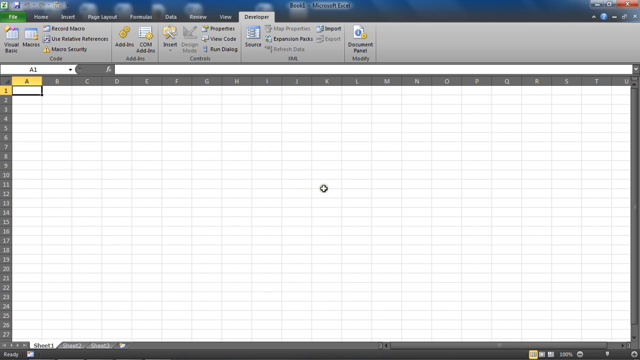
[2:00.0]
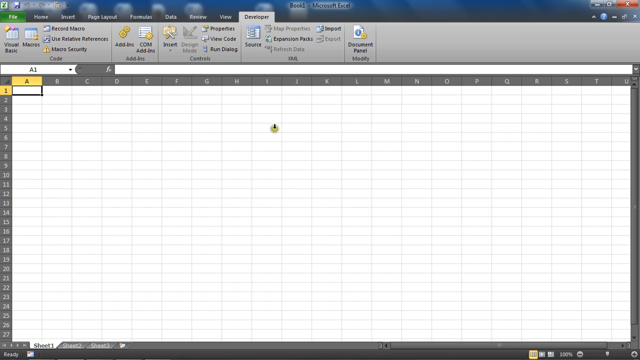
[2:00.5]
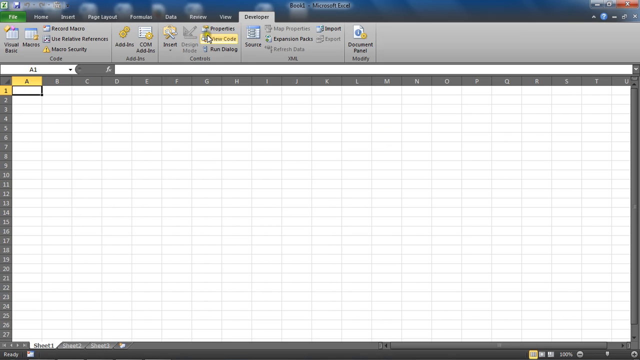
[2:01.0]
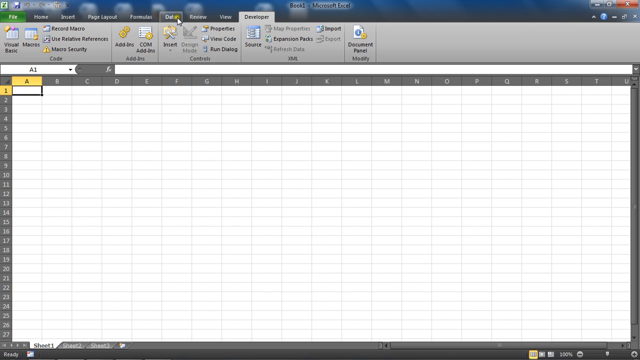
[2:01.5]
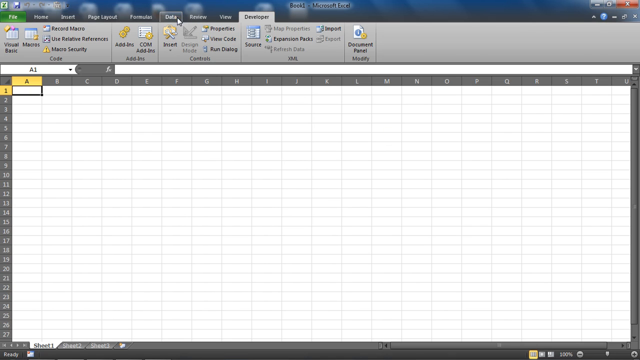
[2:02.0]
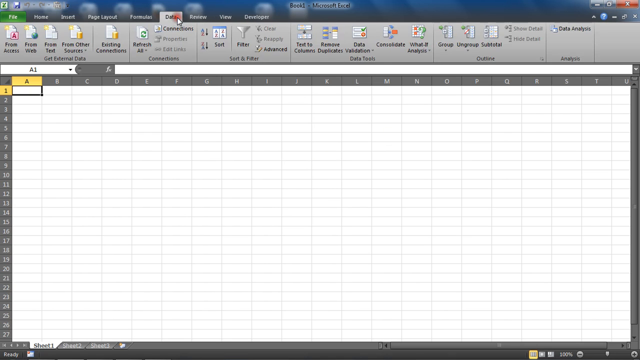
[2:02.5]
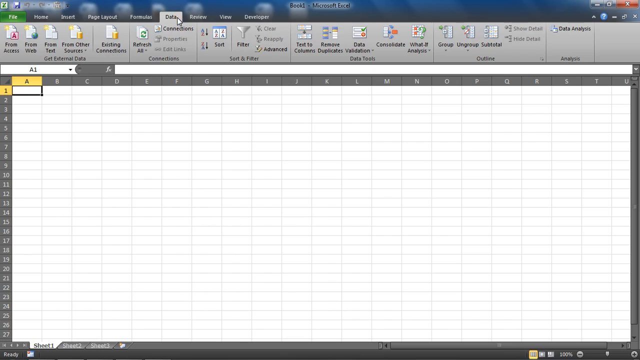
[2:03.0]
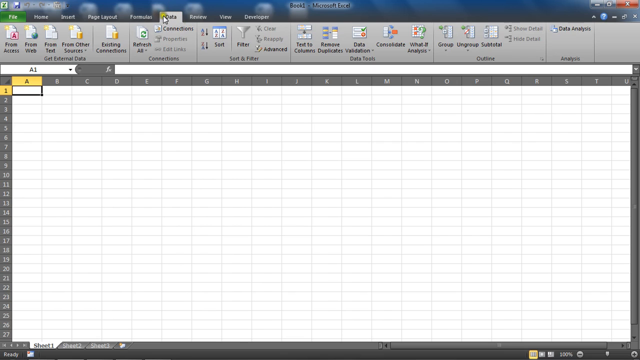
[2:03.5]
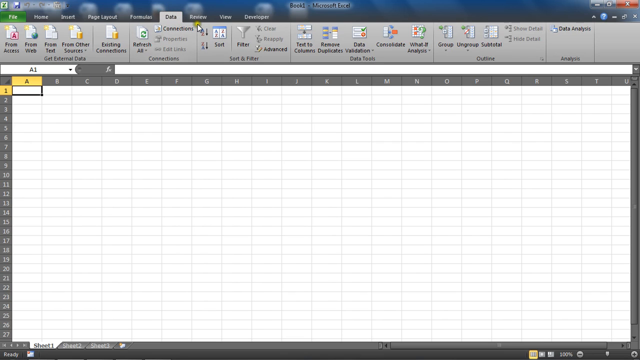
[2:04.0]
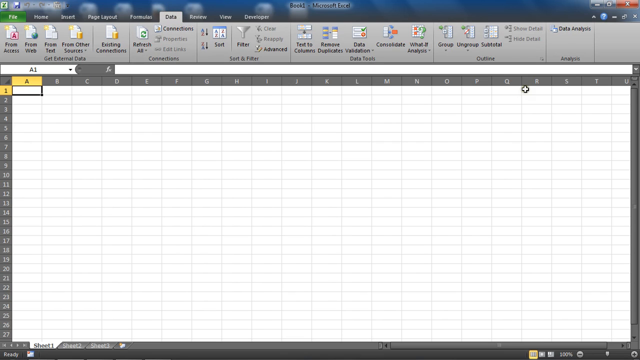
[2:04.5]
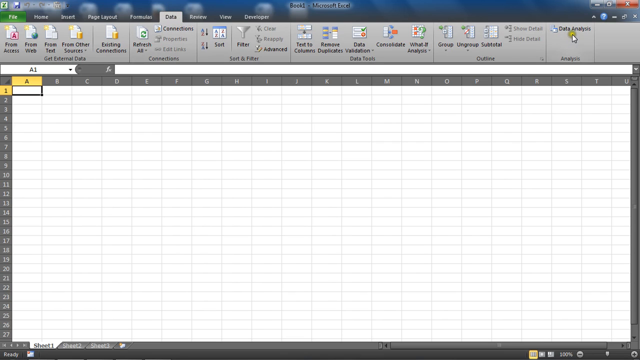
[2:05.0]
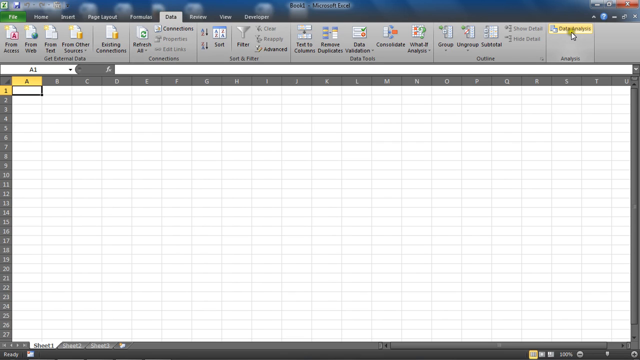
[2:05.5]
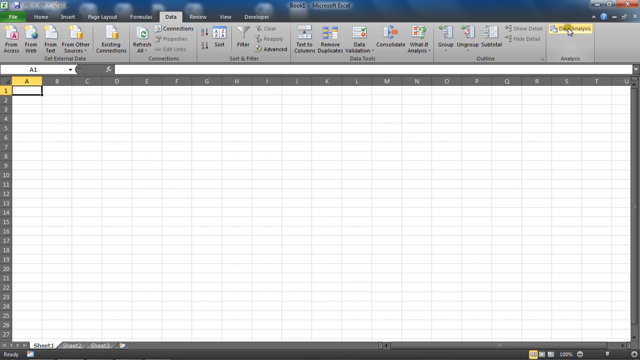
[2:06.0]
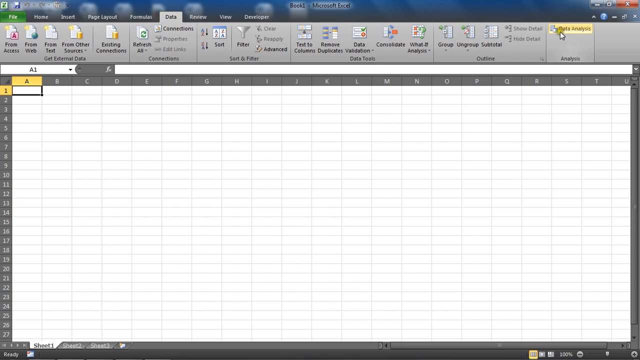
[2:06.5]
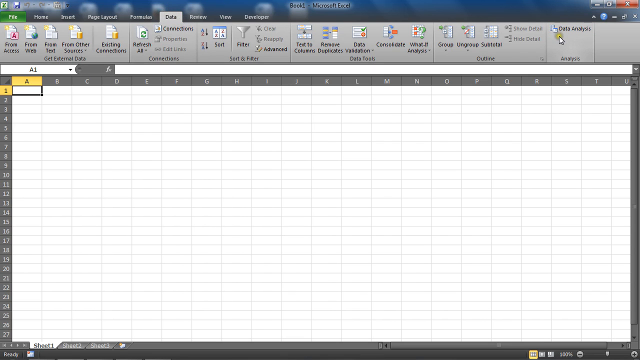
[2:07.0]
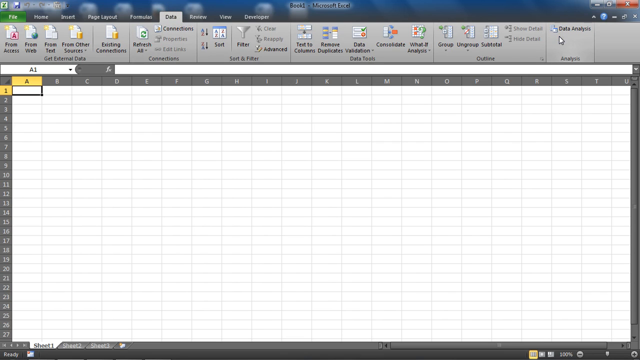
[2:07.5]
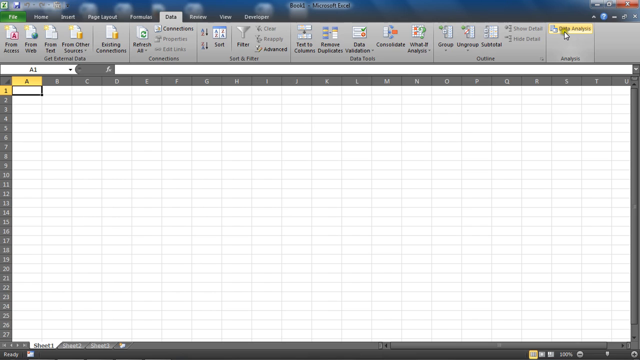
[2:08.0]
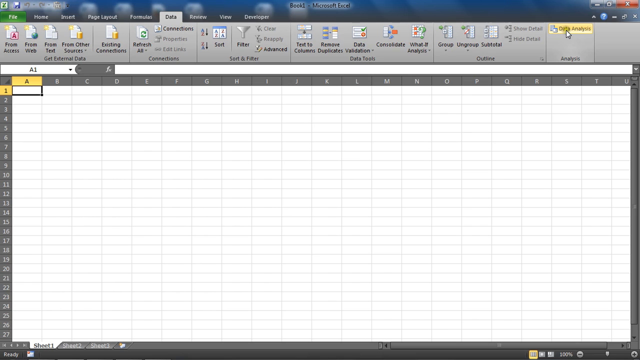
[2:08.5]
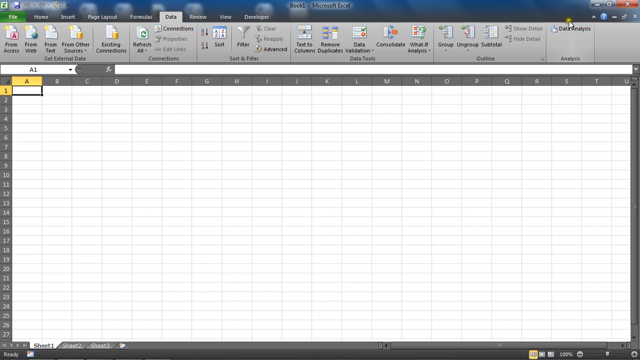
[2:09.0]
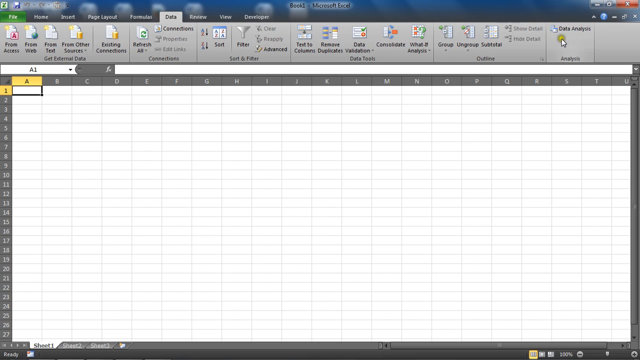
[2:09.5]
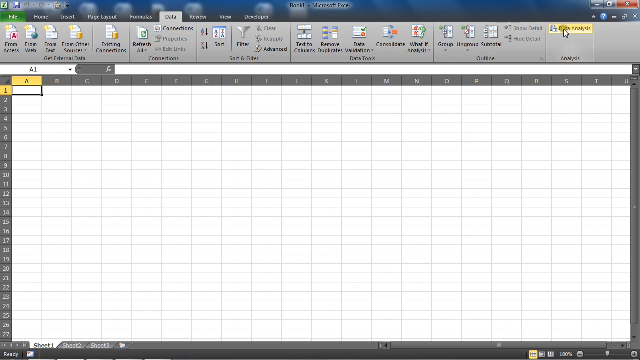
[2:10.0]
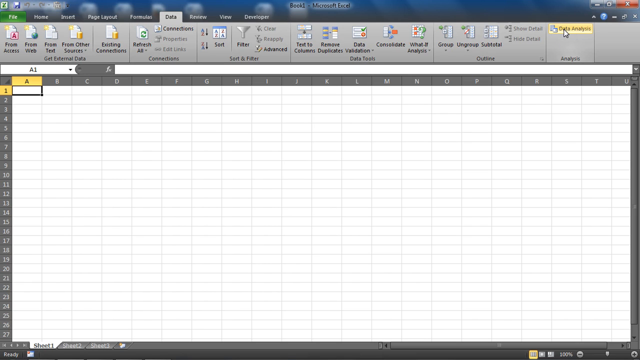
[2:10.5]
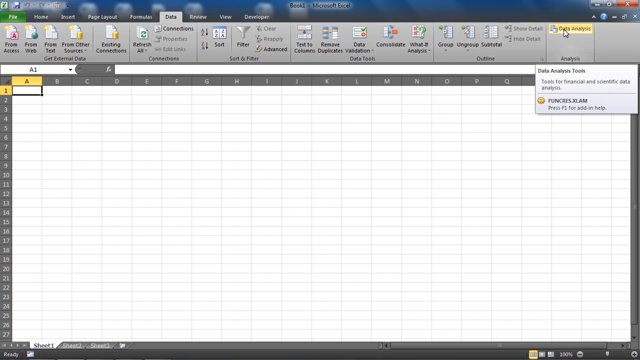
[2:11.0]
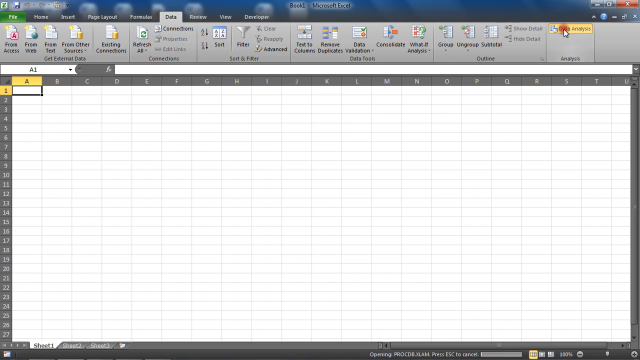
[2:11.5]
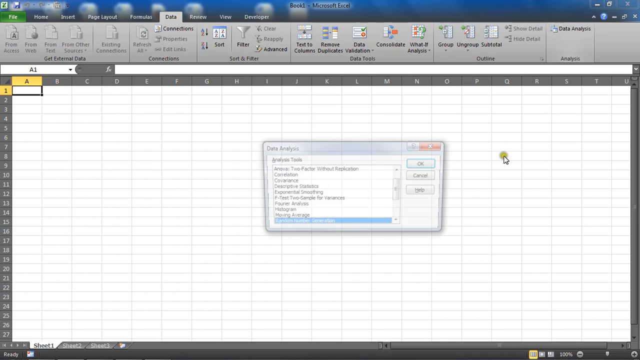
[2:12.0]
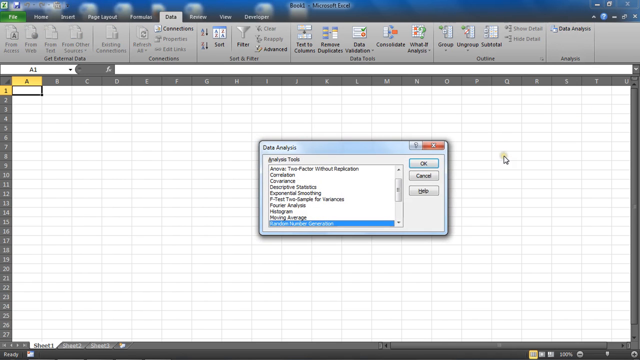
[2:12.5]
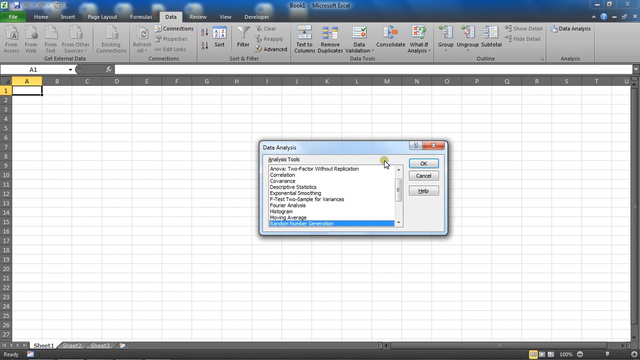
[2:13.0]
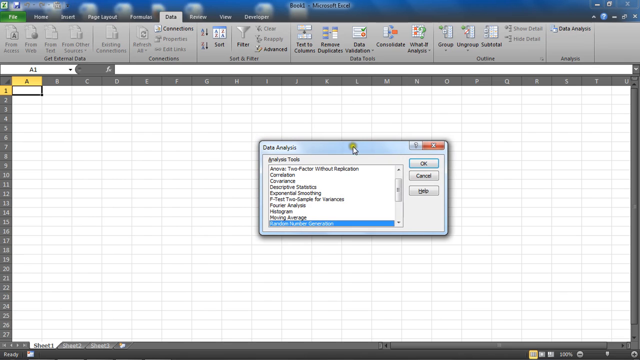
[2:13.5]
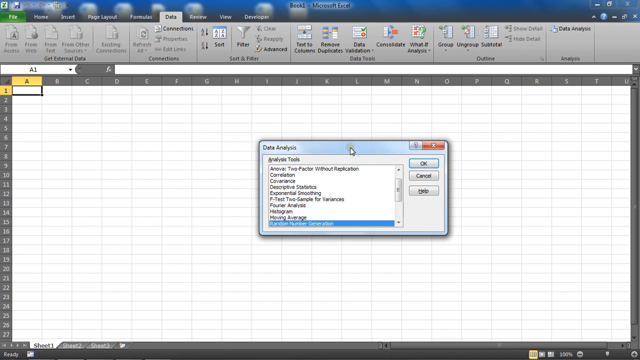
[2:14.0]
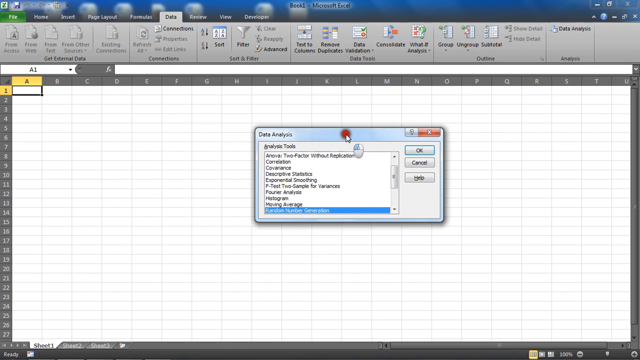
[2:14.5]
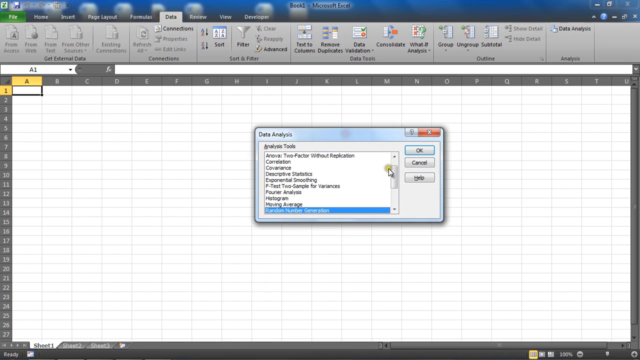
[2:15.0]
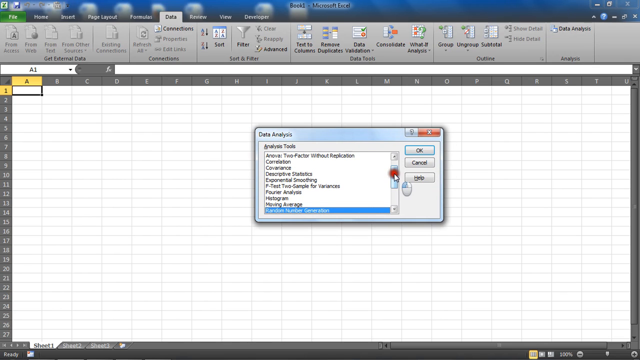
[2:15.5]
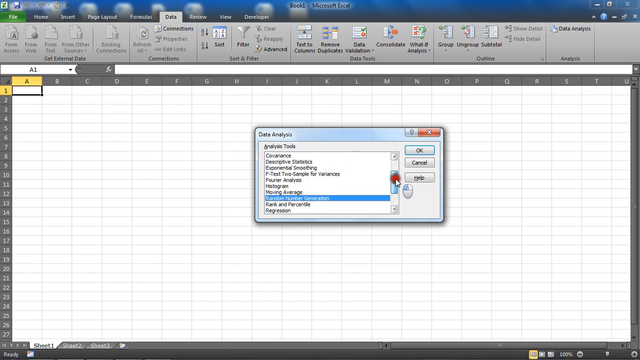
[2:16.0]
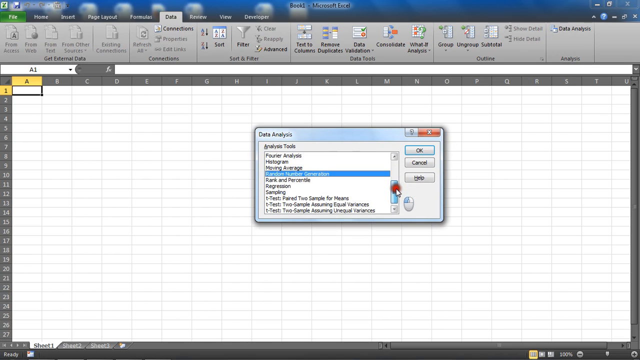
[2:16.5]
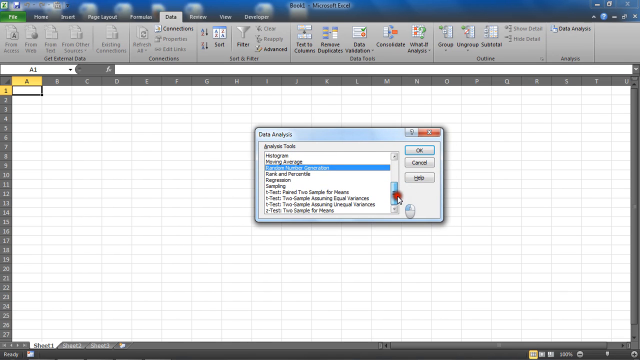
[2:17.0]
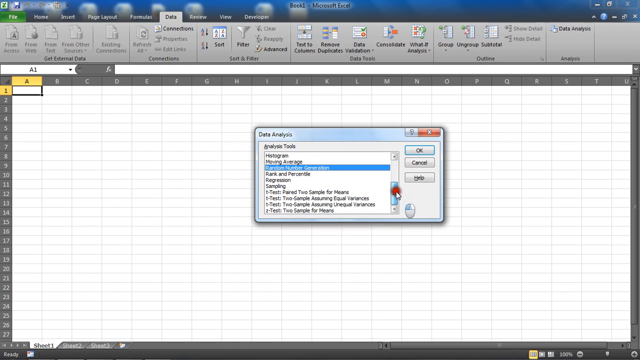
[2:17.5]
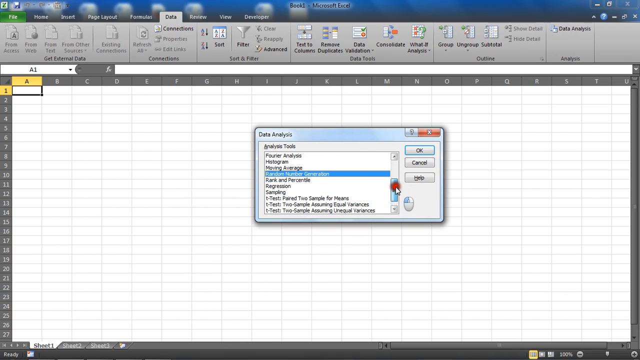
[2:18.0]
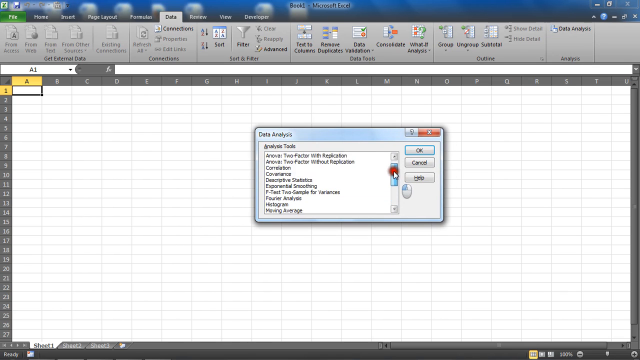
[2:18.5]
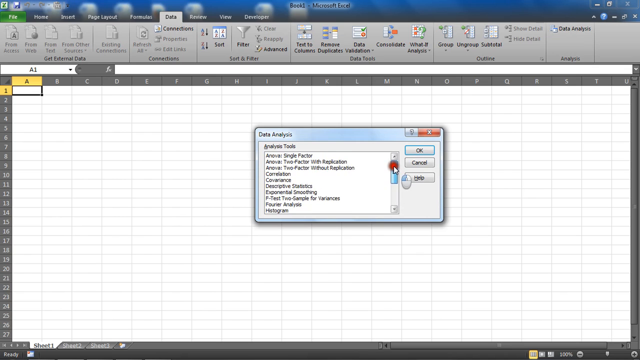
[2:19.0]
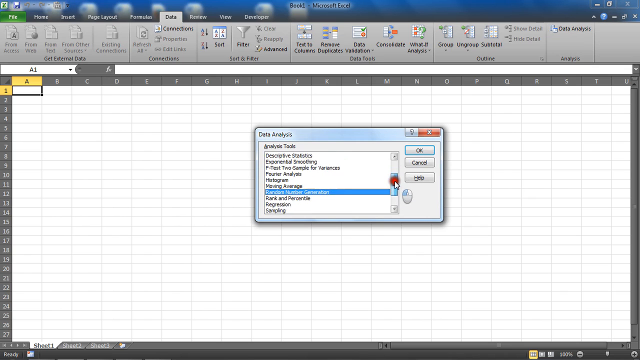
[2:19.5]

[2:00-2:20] The cursor, now a white arrow, goes up to the tabs above the toolbar and looks like it clicks the fourth from the right of nine tabs, which says "Data". The entire toolbar changes to a different set of choices: lots of words with graphics near them that look like pages and other things. One says Sort, one near the middle says Filter, and a small one on the right, all by itself with nothing below it, says Data Analysis. The cursor goes to Data Analysis and hovers over it, turning it highlighted yellow for a fraction of a second; it does not seem to click at first. While it hovers, a small white field with some text opens below for a fraction of a second and then disappears. The arrow then clicks it, shown by a red circle flash, and a window opens in the middle of the screen overlapping the empty Excel cells. The top of the window is light blue with "Data Analysis" in the upper left, and "Analysis Tools" is indented below that. Below is a field with about 10 choices, the last one highlighted in blue. The cursor grabs the top of the window, moves it up and to the left a tiny bit, and lets go. It then goes to the scroll bar to the right of the list and clicks and pulls it down to reveal more options, probably about 18 in total.